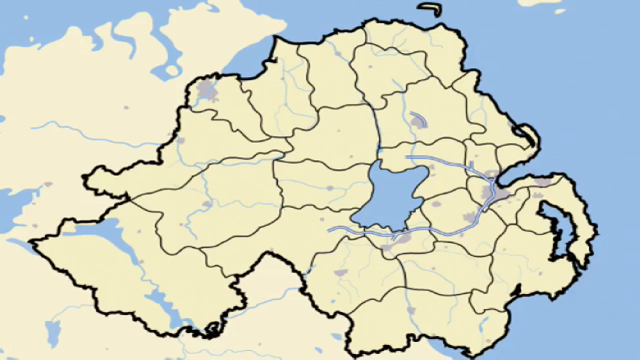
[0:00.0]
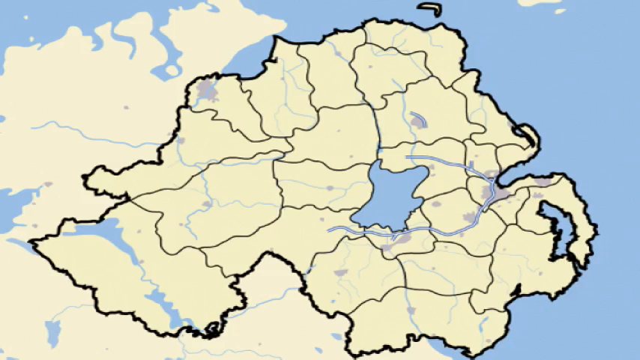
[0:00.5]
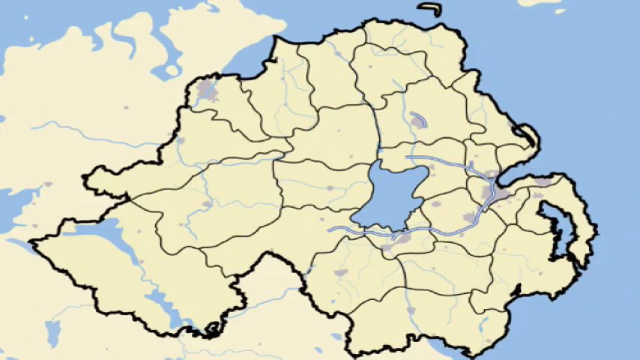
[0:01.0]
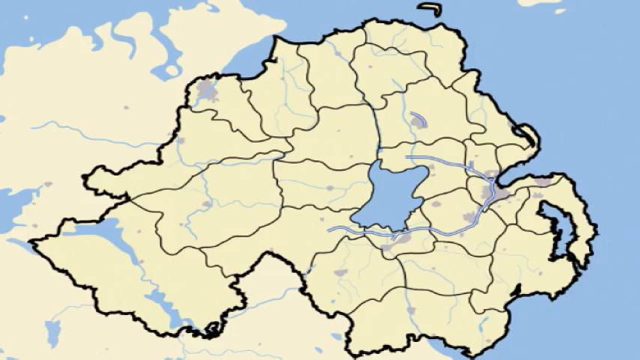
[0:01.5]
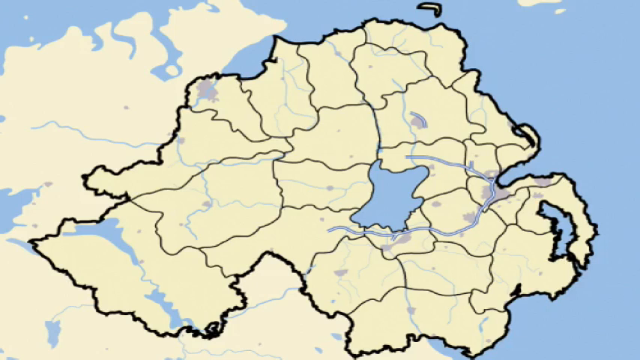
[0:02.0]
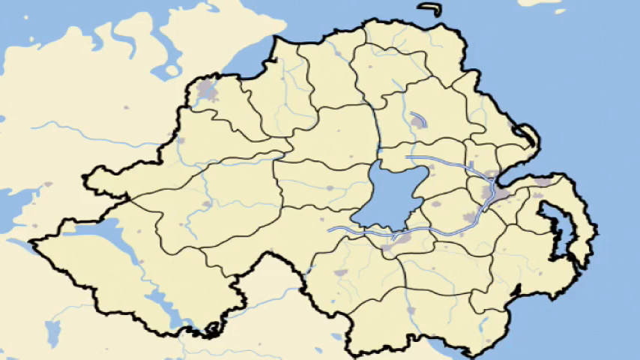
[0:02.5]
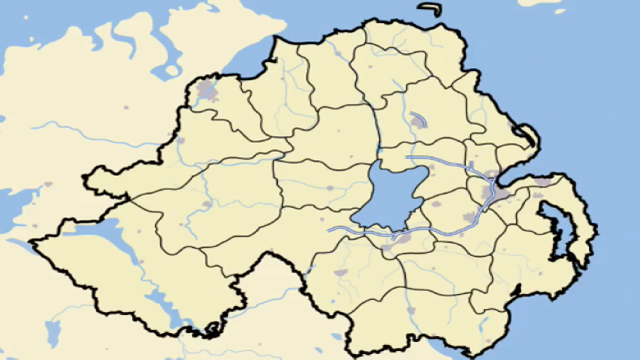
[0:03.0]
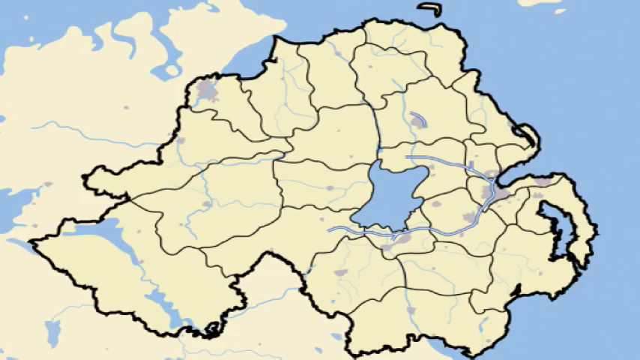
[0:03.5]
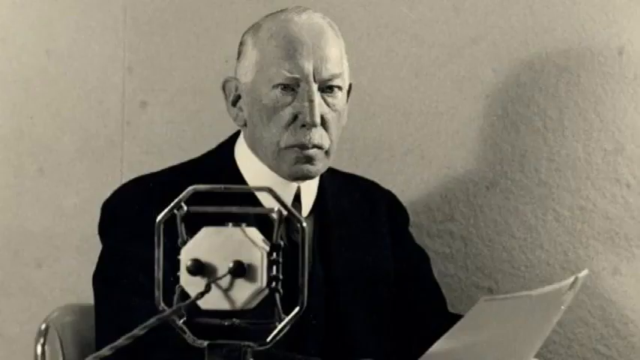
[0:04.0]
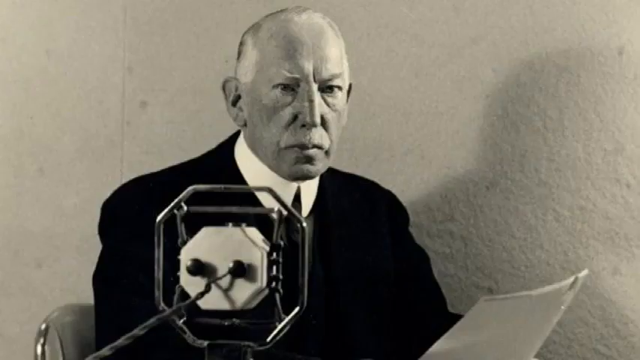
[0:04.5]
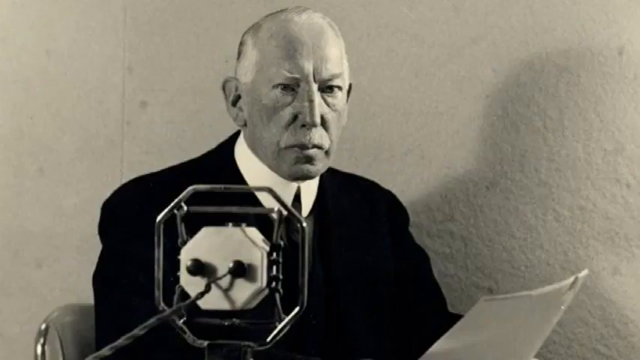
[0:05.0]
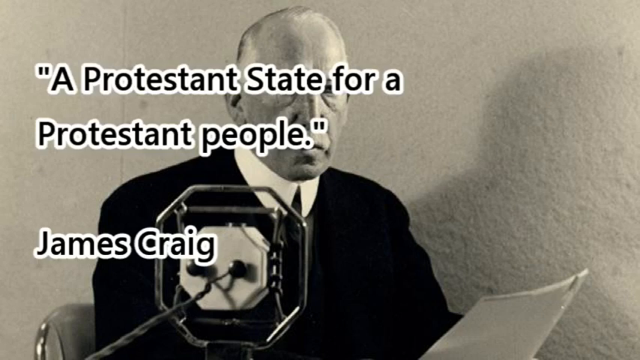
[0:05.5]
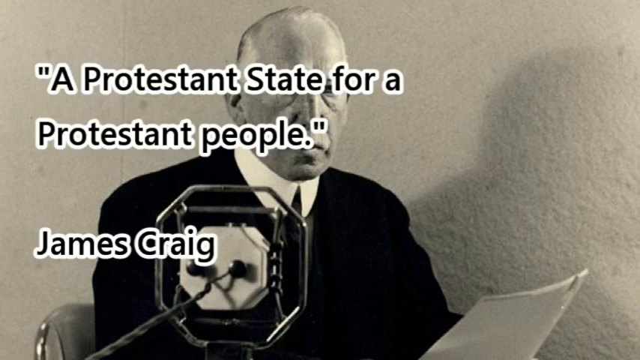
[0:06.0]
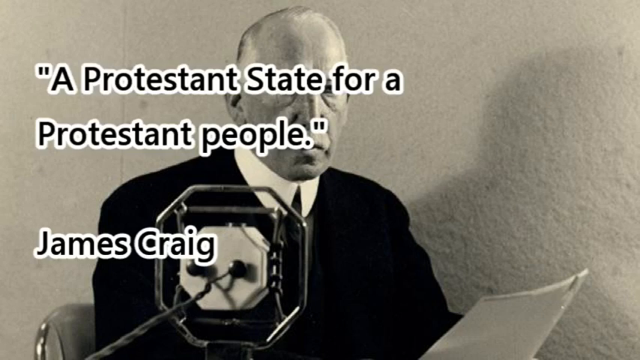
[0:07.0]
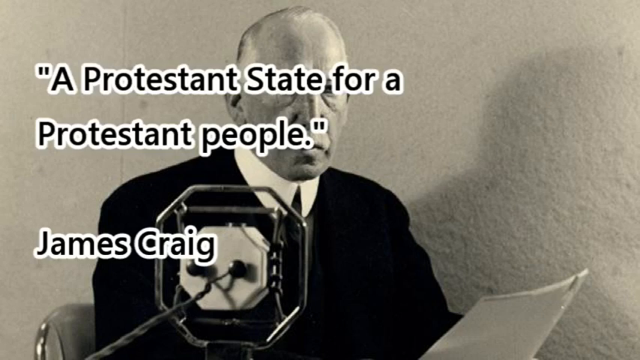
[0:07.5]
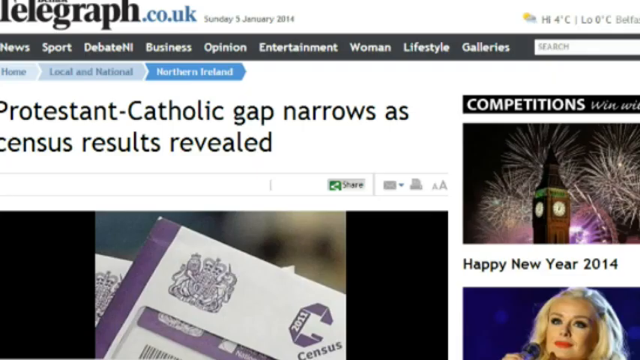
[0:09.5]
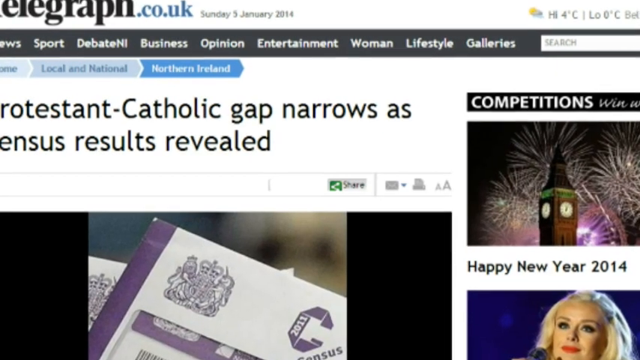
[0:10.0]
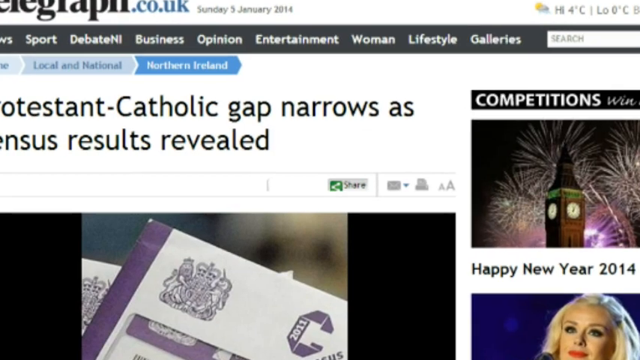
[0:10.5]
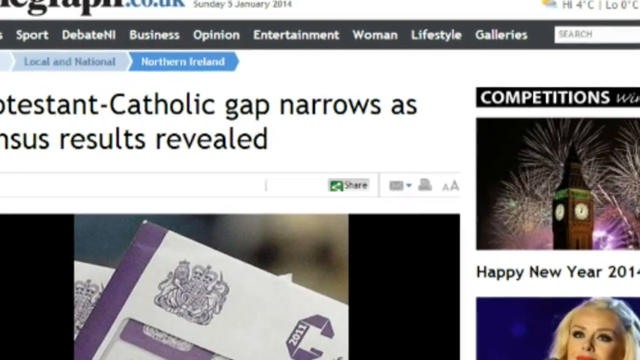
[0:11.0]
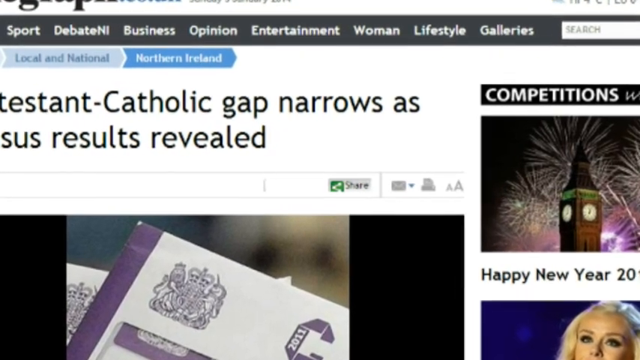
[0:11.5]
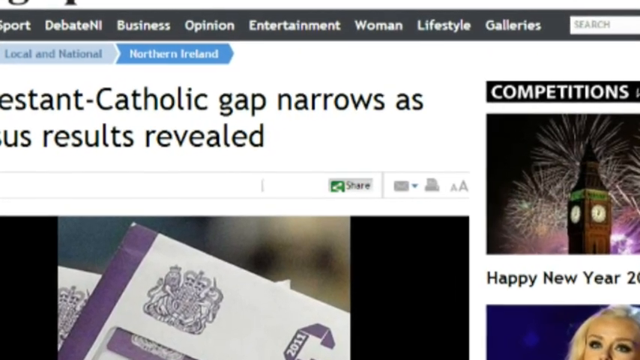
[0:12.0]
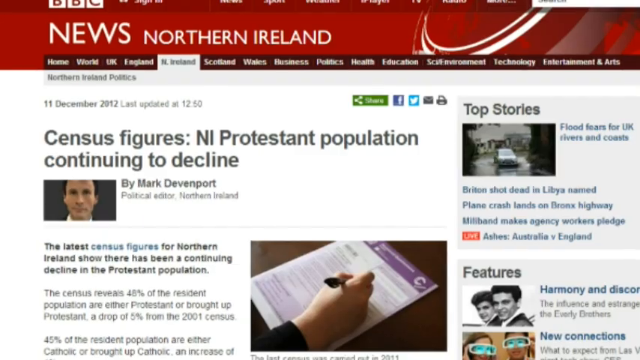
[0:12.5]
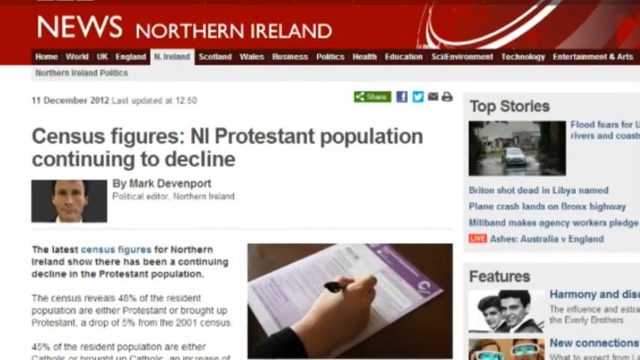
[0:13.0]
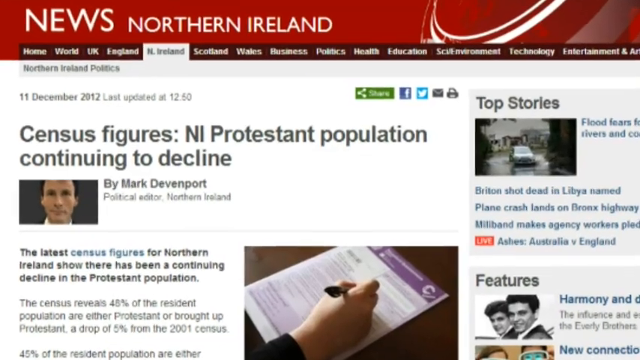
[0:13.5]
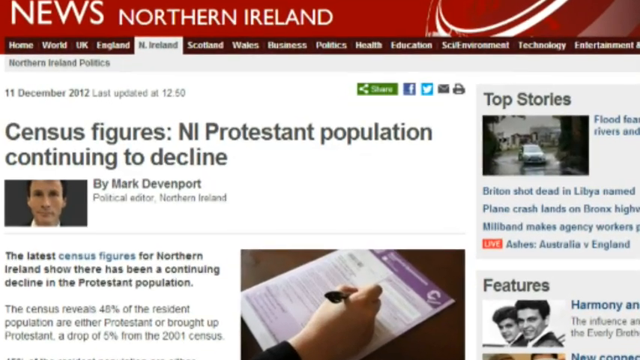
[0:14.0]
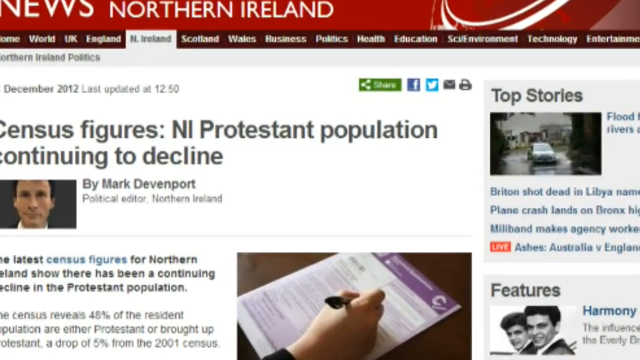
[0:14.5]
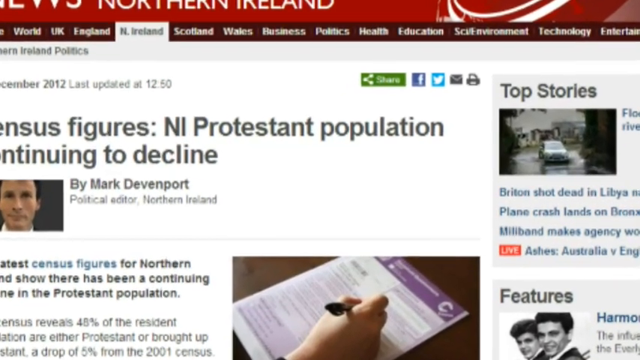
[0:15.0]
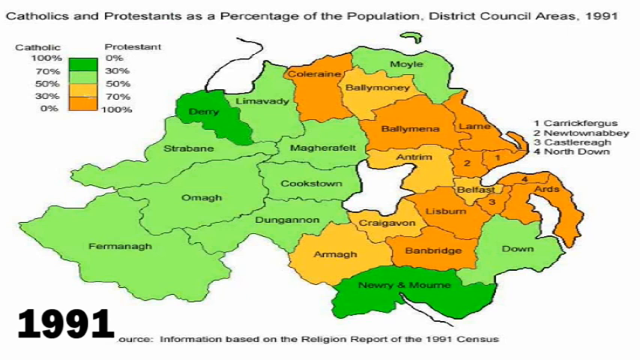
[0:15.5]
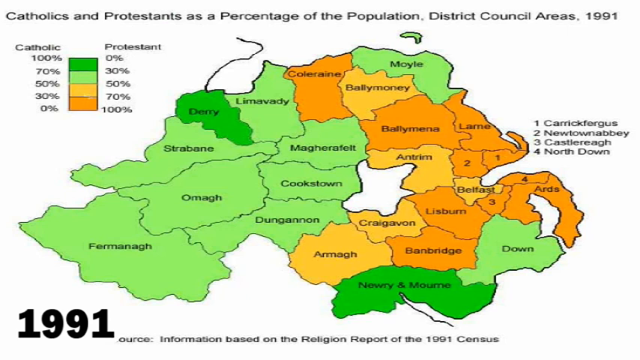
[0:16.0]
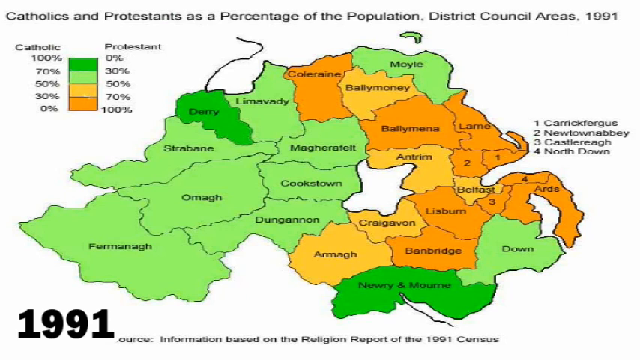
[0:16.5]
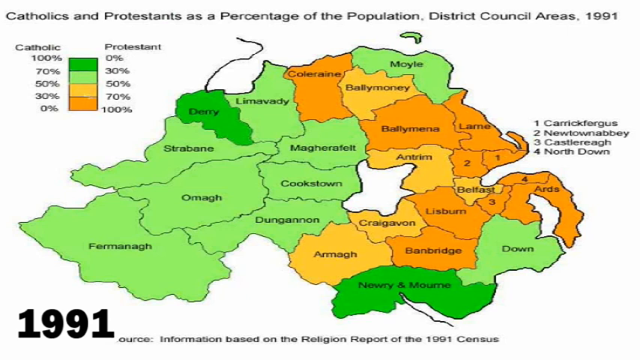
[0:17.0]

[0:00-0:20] The video opens with a computer map that does not clearly show which country it is: a kind of rounded country in tan, surrounded by blue ocean, with black borders. It stays on screen for only a few seconds before switching to a black-and-white still photo of a man, probably in his 60s or 70s, with a gray mustache, wearing a black jacket and a tie. He is sitting in a room with a metal device in front of him that has wires coming out the back, and he looks very serious. A quote then appears on screen, and the video moves to a modern-day website that looks like it is about Catholic and Protestant gaps; it is from telegraph.co.uk. The camera kind of pans in on the website, then it goes to a different website. Next comes a computer animation of a foreign country, now with the names of its different segments. Text at the top reads "Catholics and Protestants as a percentage of the population", and the map has different colors such as green, orange and yellow, with different districts.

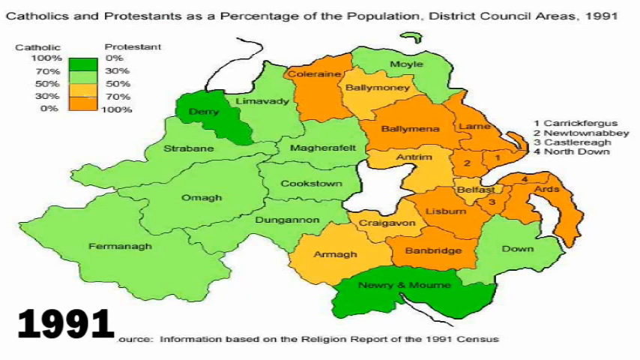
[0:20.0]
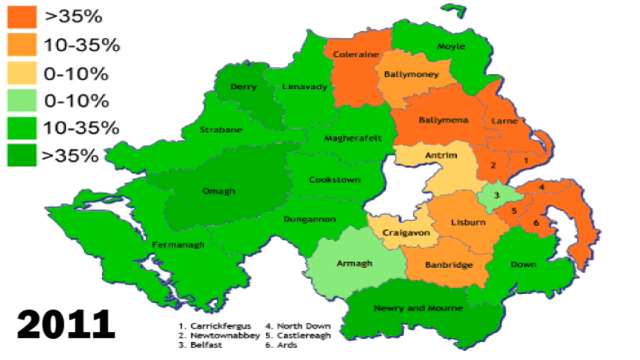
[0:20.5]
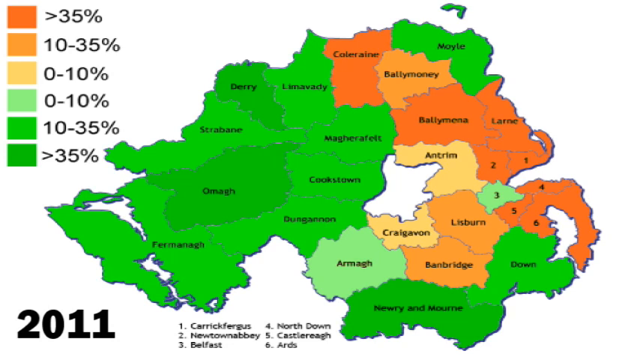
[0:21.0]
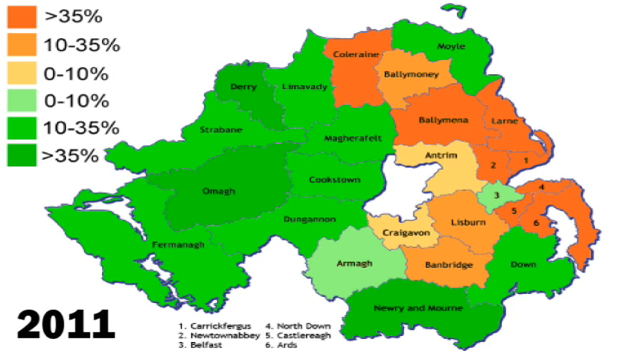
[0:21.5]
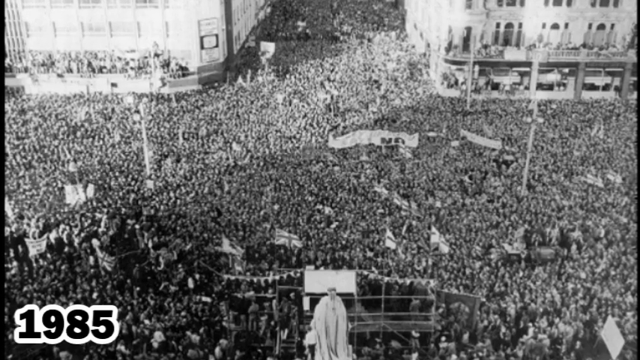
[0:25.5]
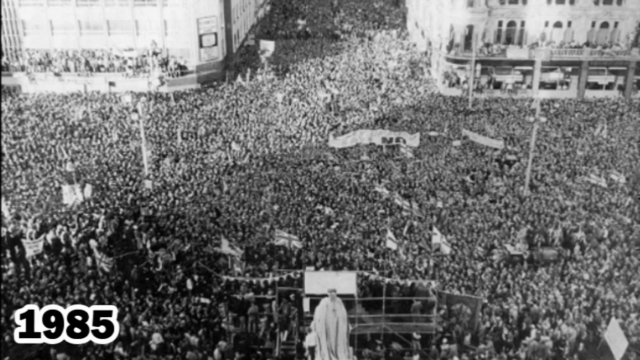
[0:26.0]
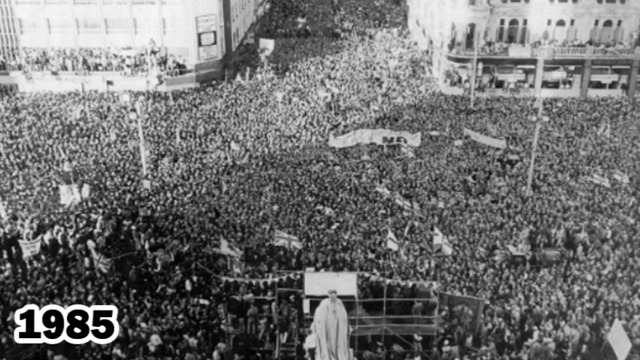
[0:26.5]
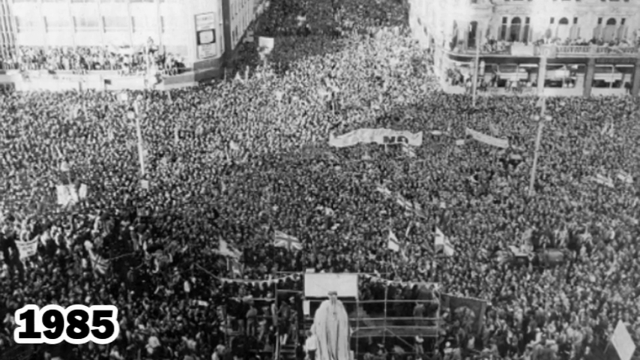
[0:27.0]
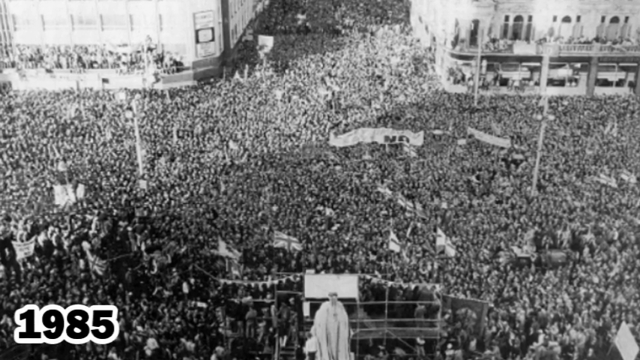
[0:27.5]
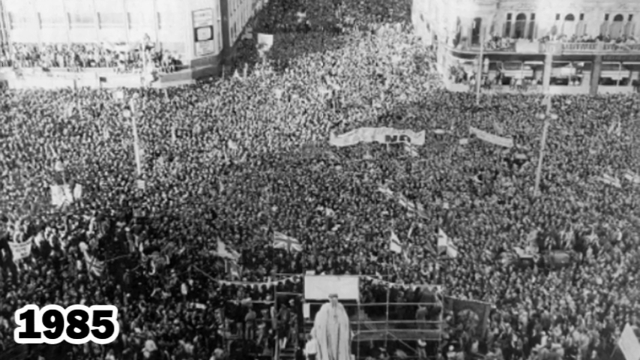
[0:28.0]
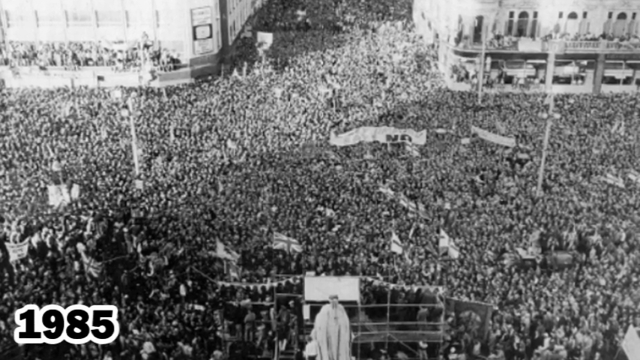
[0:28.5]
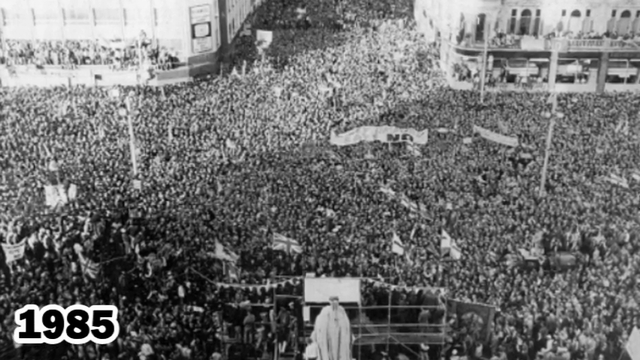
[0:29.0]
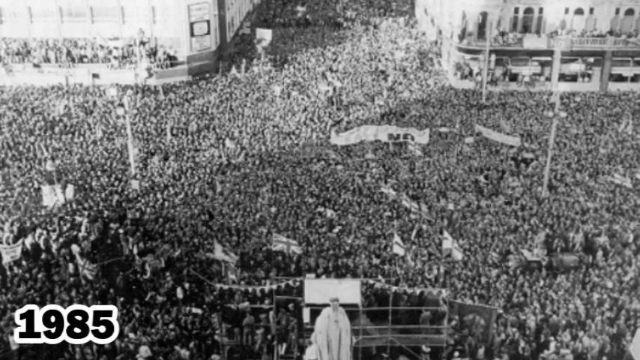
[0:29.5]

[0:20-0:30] Still, computer-generated images of a couple of different maps appear, colored green, orange and a kind of tan. The country is sort of bulbous and rounded, with different regions carved out on it bearing unusual names such as Antrim and Moyle. The bottom left of the map shows the year "2011". The video then cuts to a black-and-white still image with "1985" at the bottom left. It looks like thousands of people on a city street, possibly protesting, holding banners and signs. The photo is taken from high up, probably looking down from a tall building, with other buildings in the background, clearly an urban area. The image lingers on the people, then switches back to a map, so the video kind of toggles between the computer-generated map and the black-and-white photo.